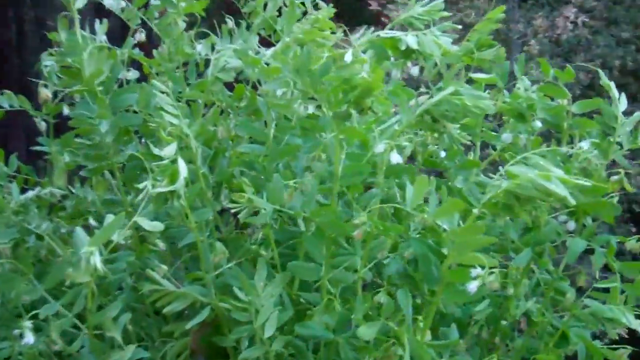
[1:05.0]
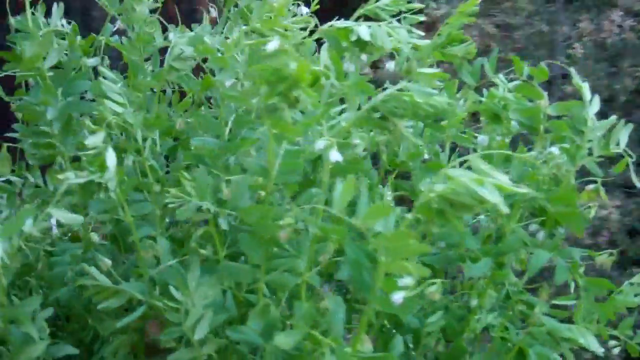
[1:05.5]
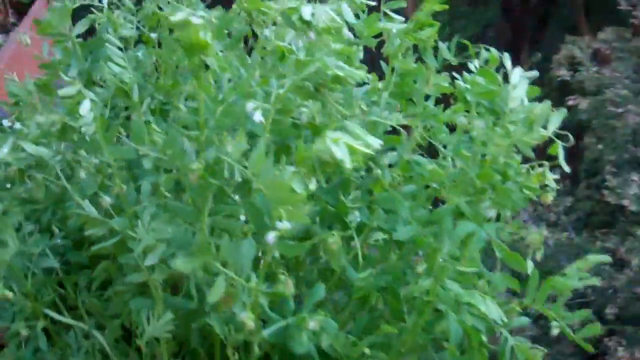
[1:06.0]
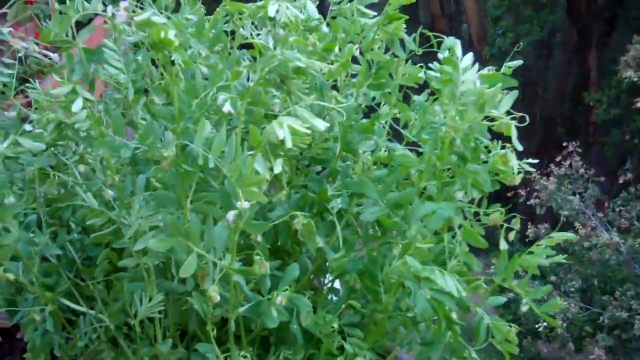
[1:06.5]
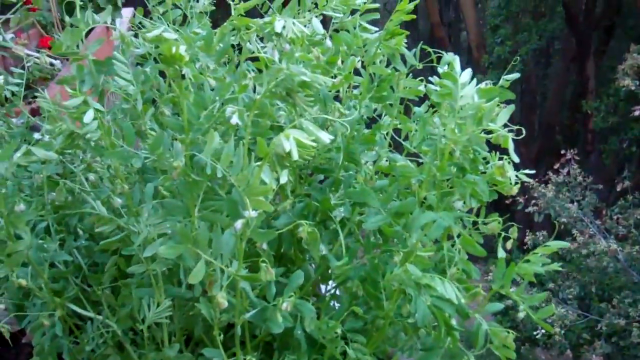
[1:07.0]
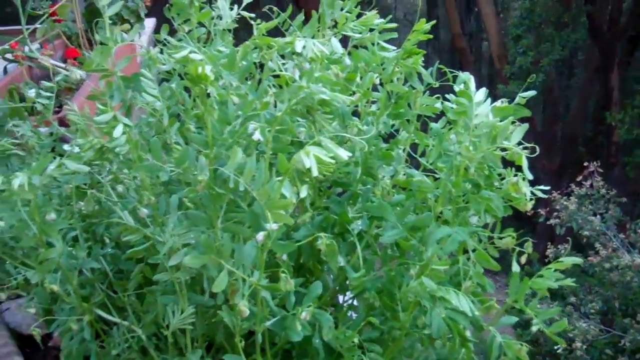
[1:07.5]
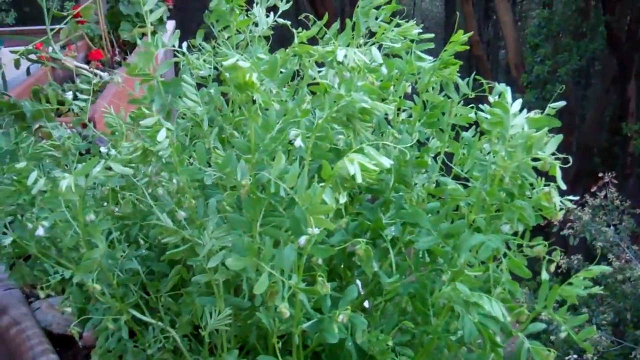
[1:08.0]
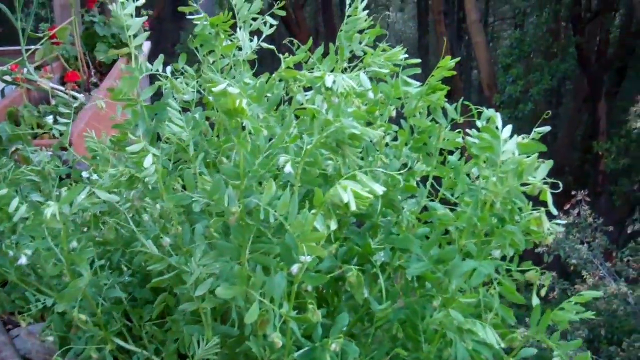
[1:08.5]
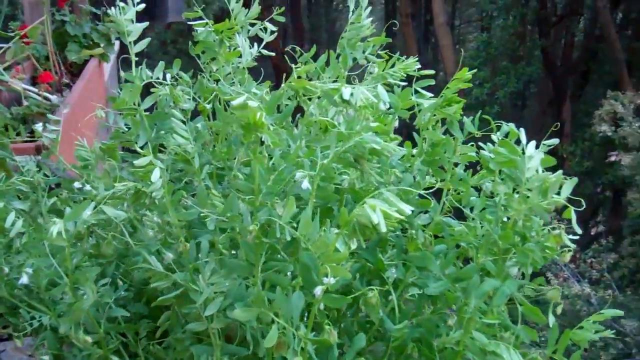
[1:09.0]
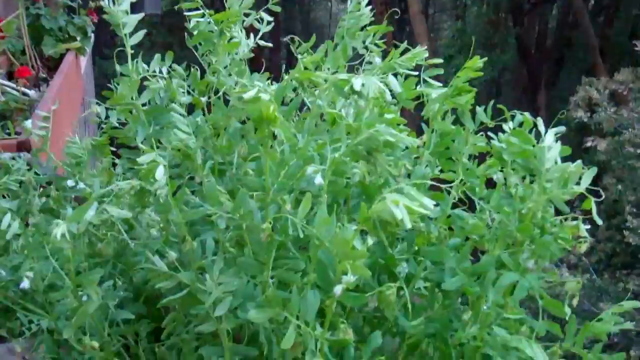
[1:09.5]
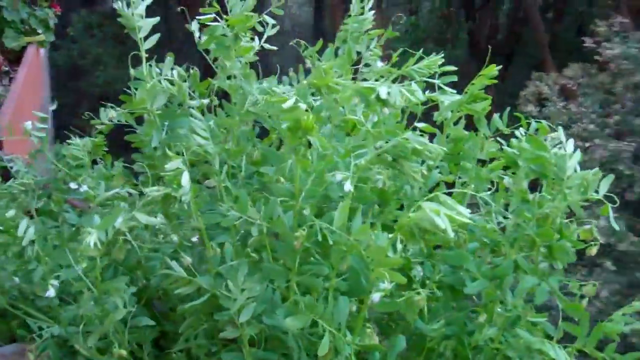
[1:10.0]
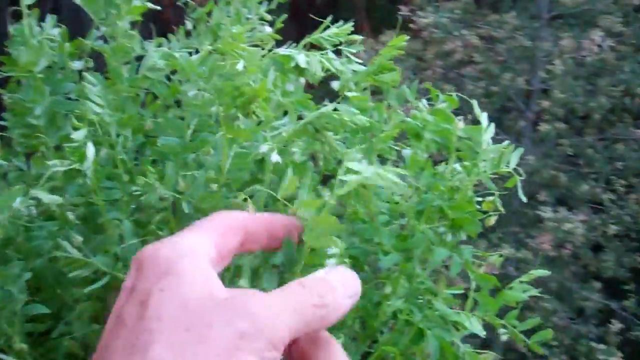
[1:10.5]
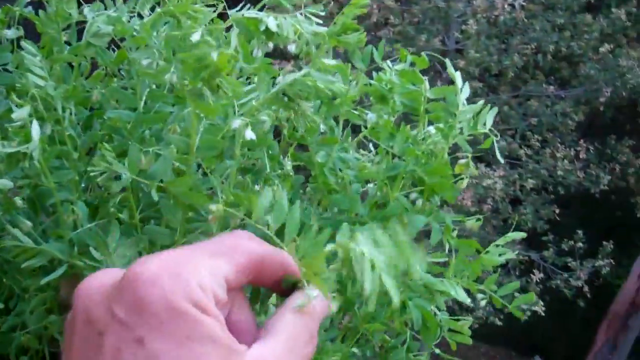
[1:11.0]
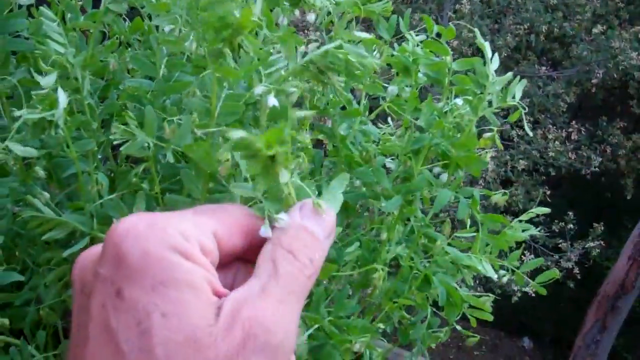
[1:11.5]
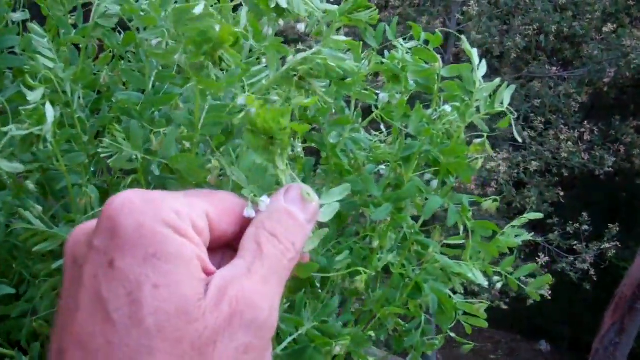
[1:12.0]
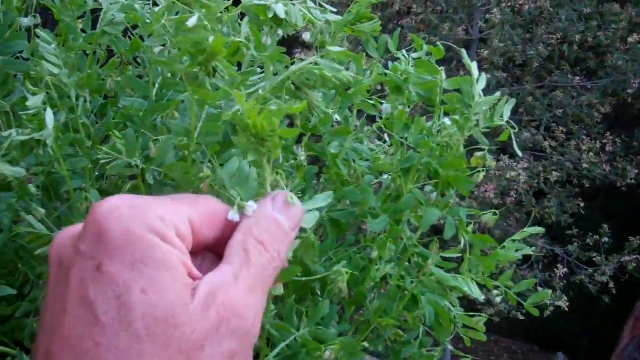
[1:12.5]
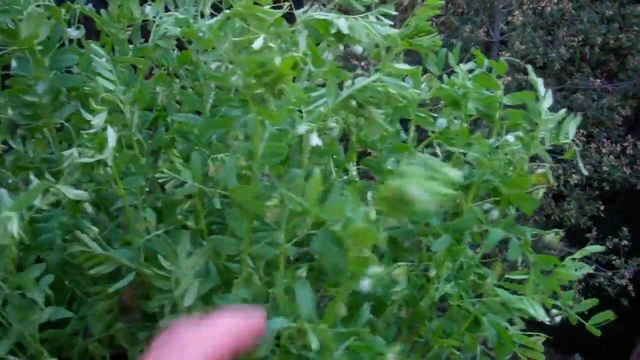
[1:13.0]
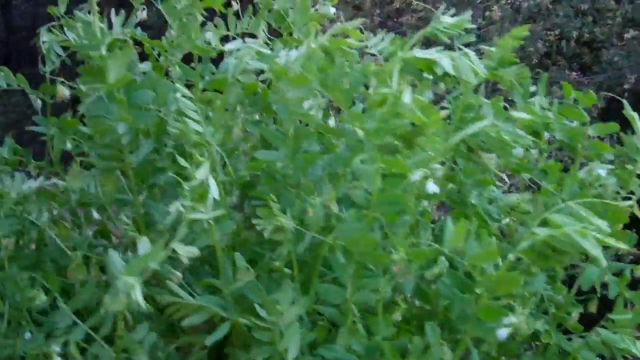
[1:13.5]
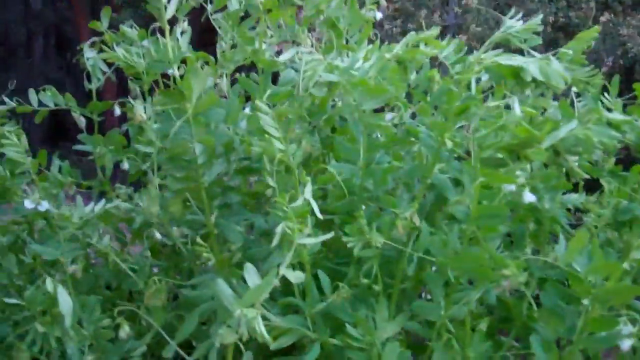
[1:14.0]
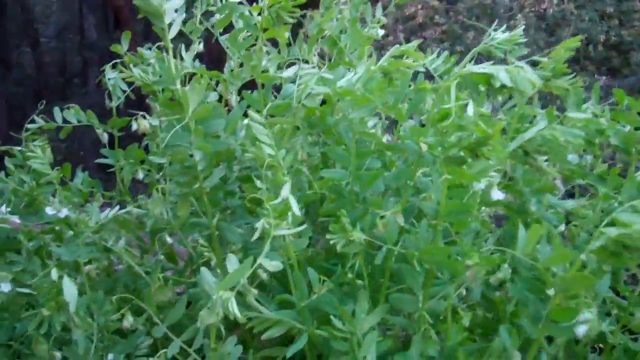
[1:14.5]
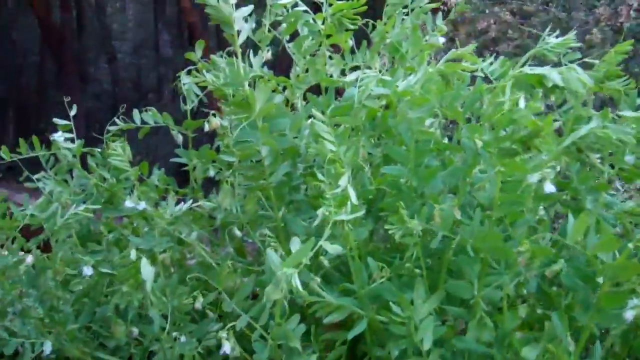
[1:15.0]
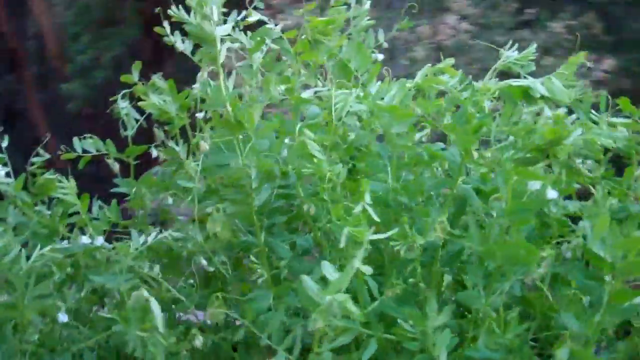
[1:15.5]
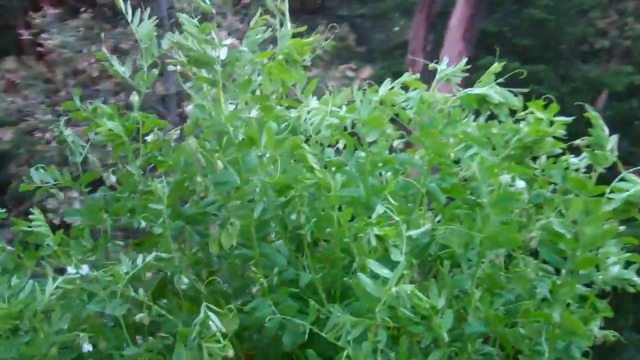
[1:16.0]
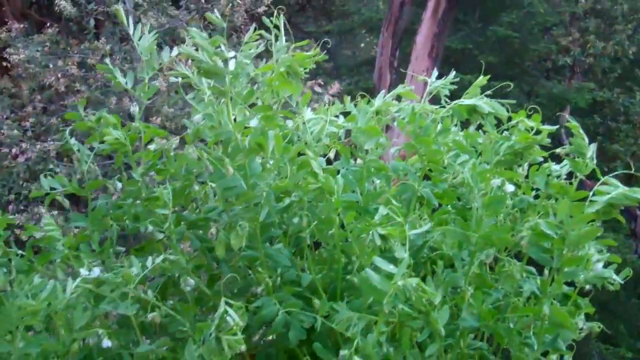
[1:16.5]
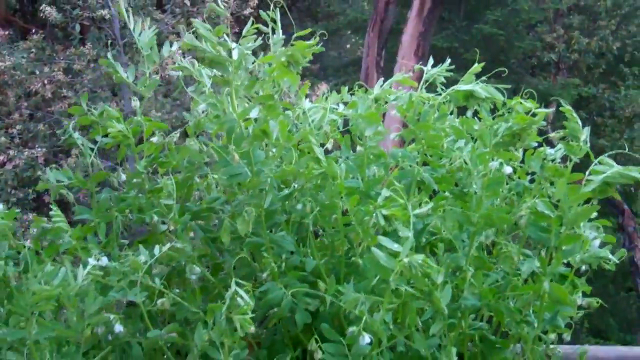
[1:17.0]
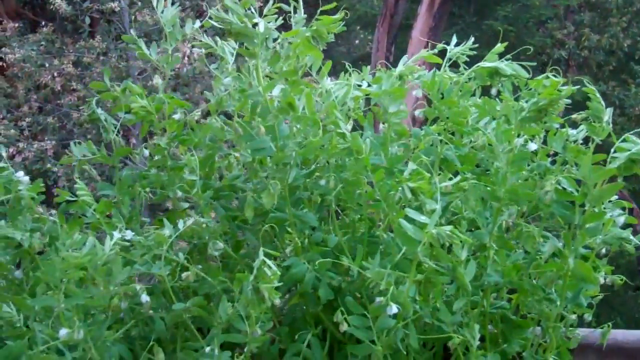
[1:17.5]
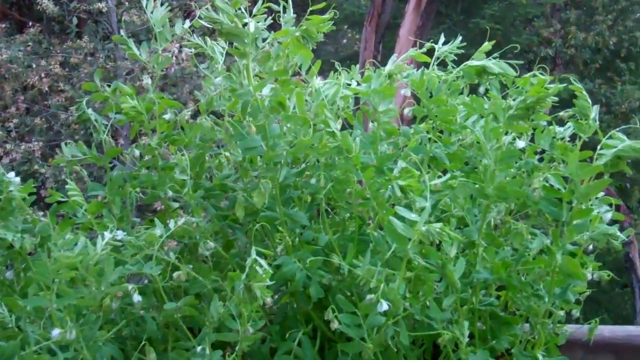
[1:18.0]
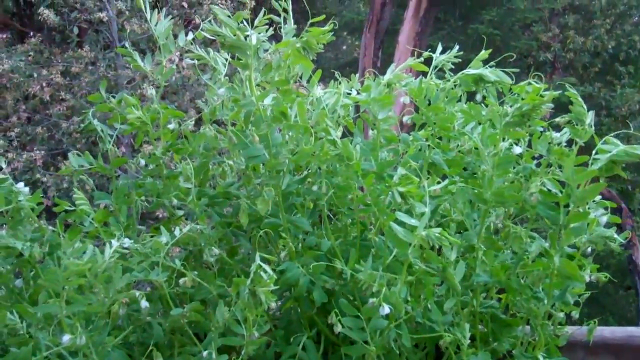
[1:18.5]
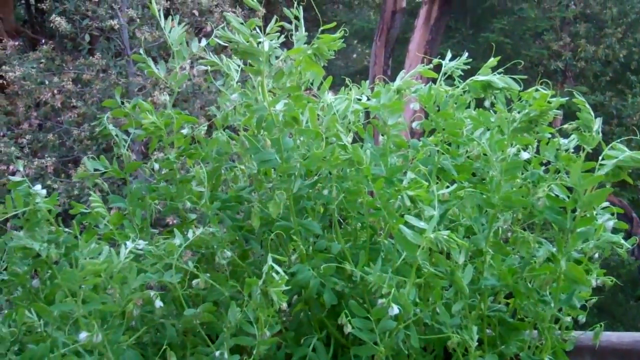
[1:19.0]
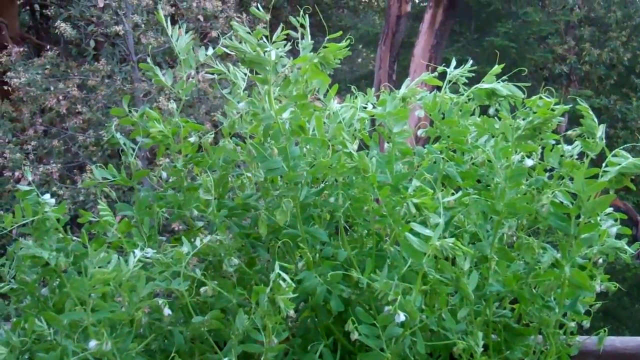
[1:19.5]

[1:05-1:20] The man pans to the right of the potted plant. He reaches out with his left hand to grab one of the stems. For a brief moment, some of his other plants are visible in the background, without much discernible detail; one might be a tomato plant, judging by some red, round objects, though this is not certain. There are two shots of the background showing trees. The shot lingers on the potted plant for a bit.